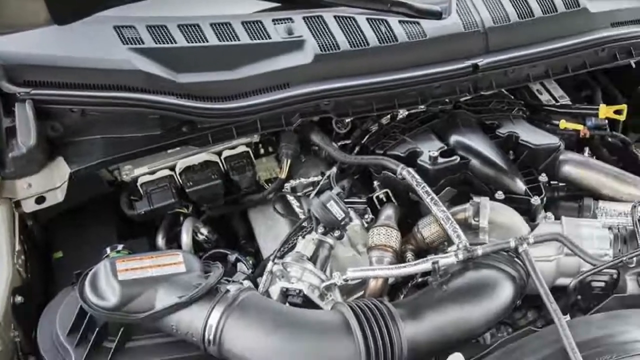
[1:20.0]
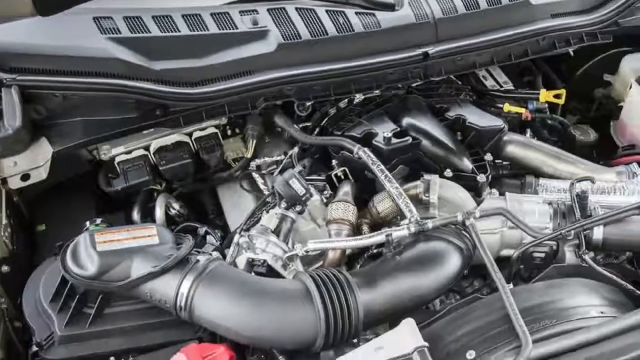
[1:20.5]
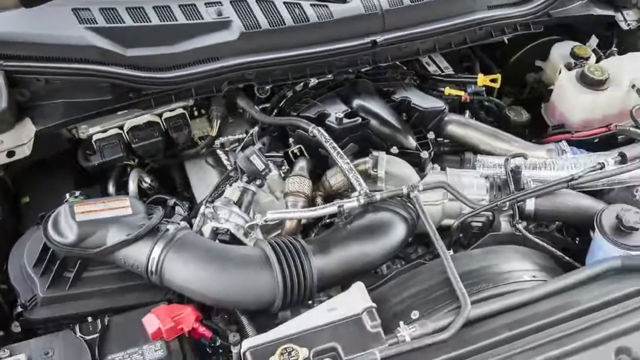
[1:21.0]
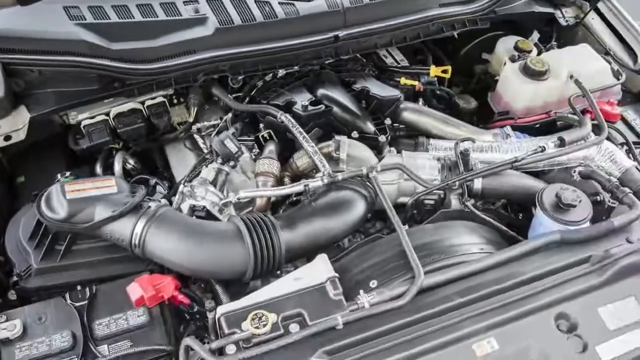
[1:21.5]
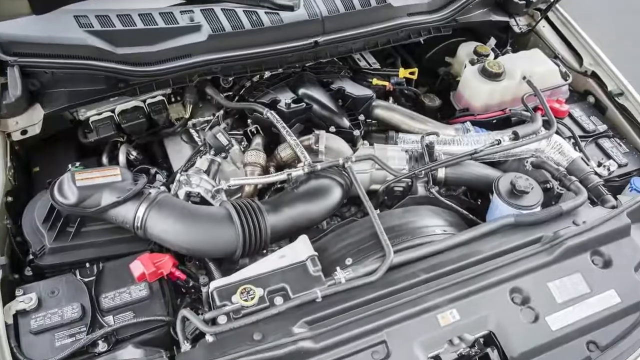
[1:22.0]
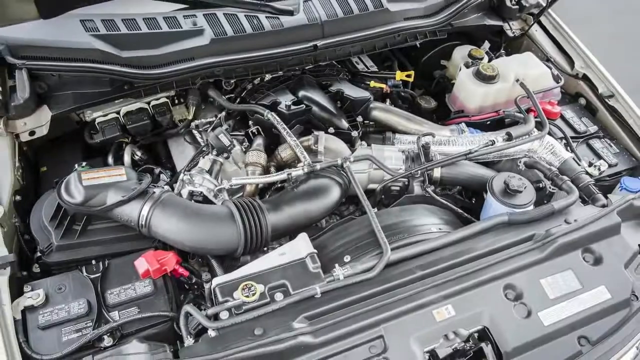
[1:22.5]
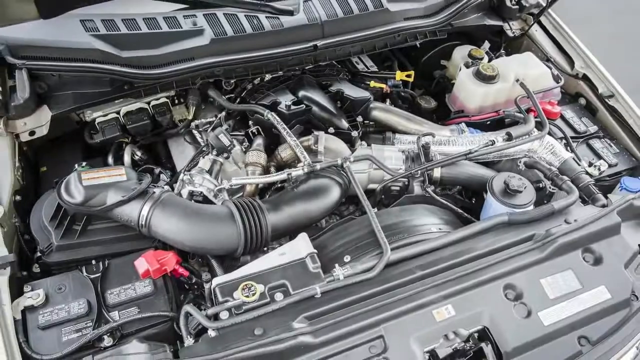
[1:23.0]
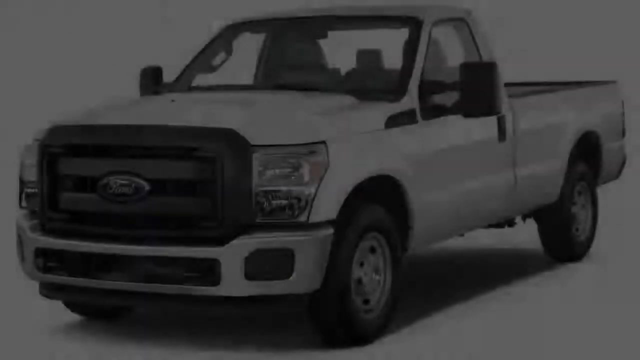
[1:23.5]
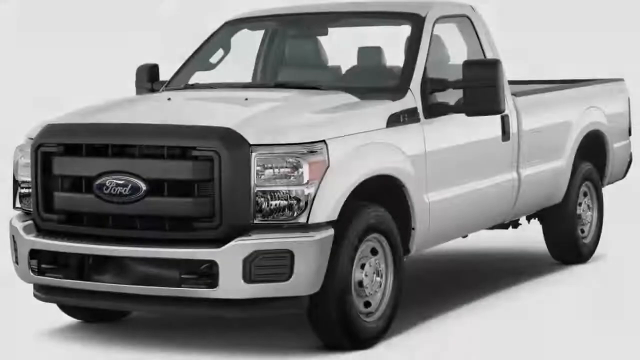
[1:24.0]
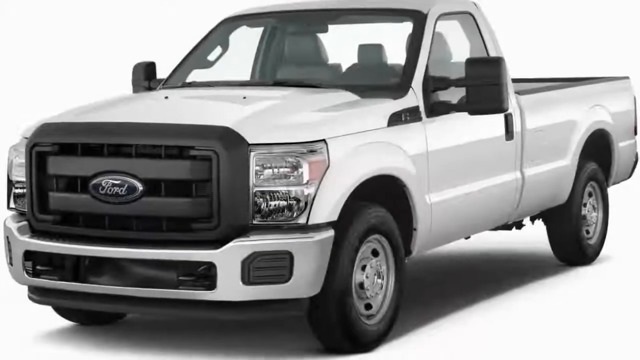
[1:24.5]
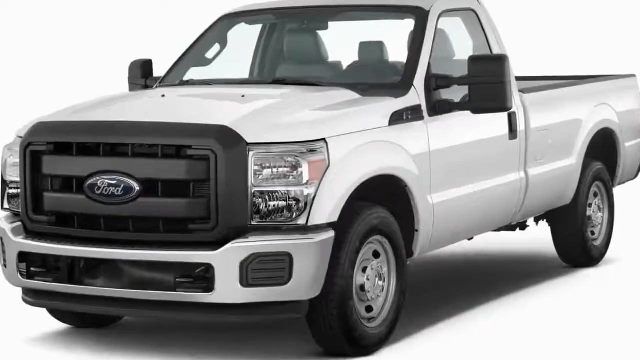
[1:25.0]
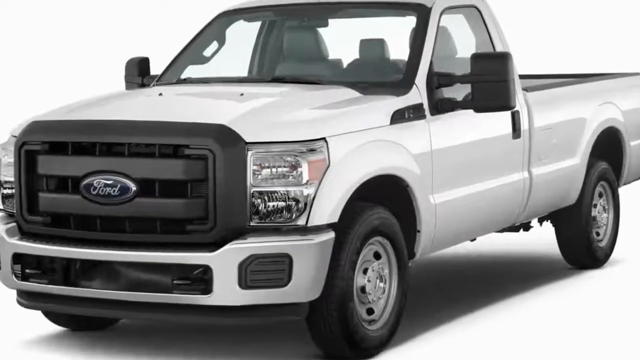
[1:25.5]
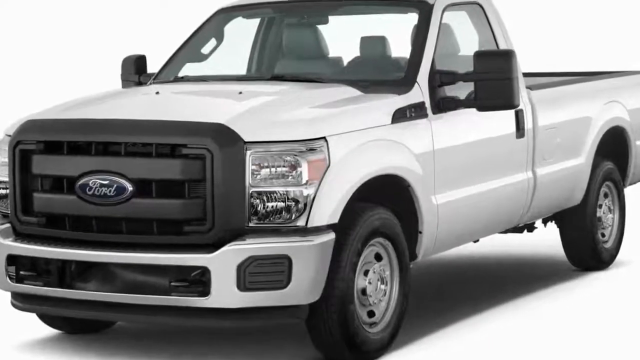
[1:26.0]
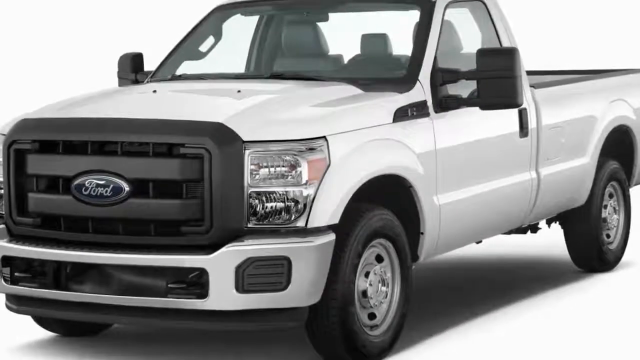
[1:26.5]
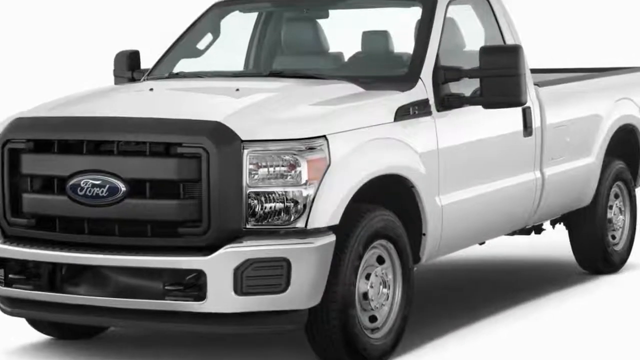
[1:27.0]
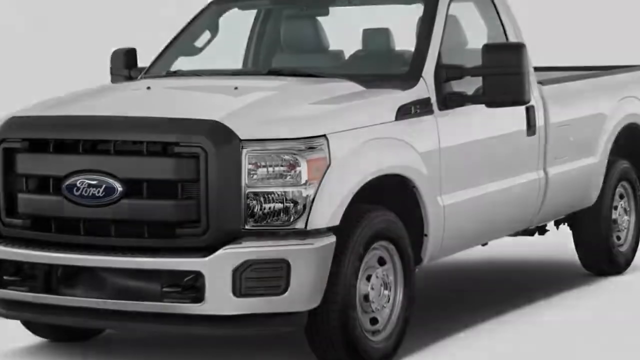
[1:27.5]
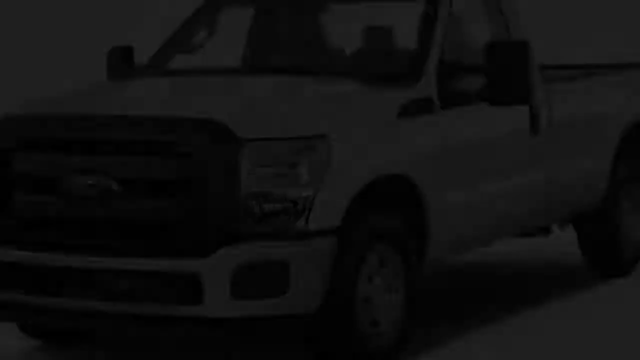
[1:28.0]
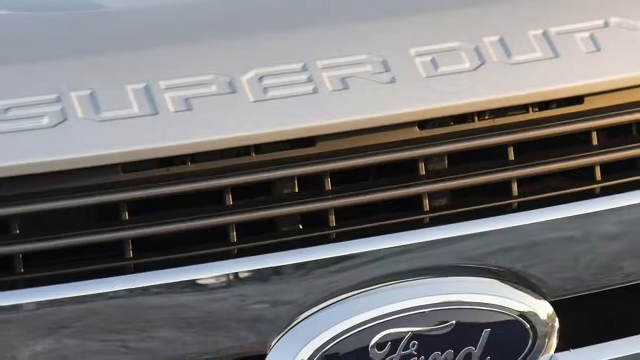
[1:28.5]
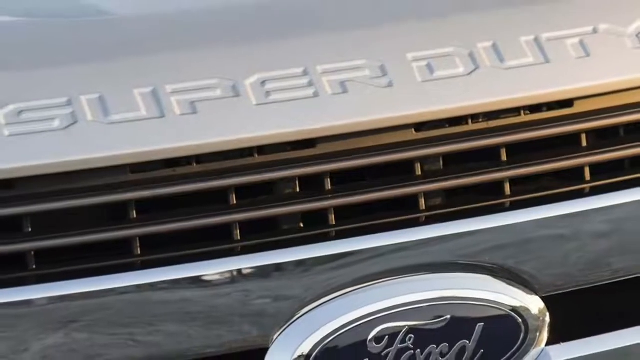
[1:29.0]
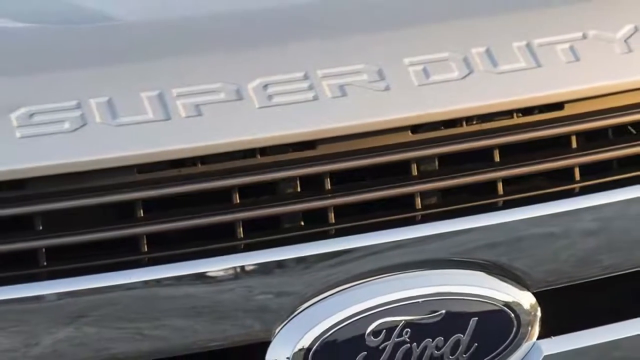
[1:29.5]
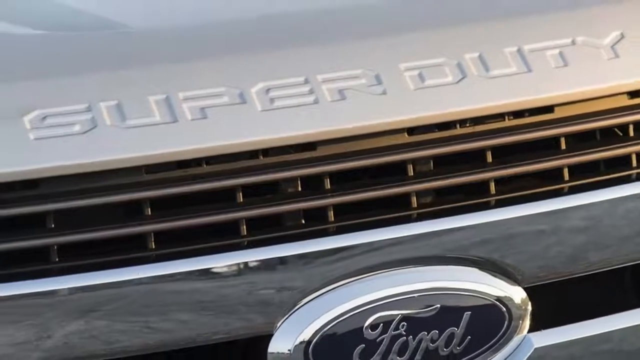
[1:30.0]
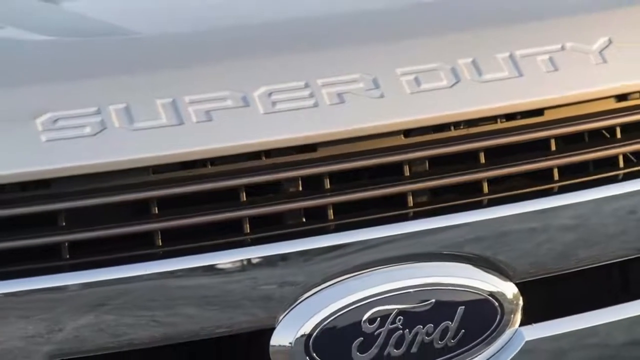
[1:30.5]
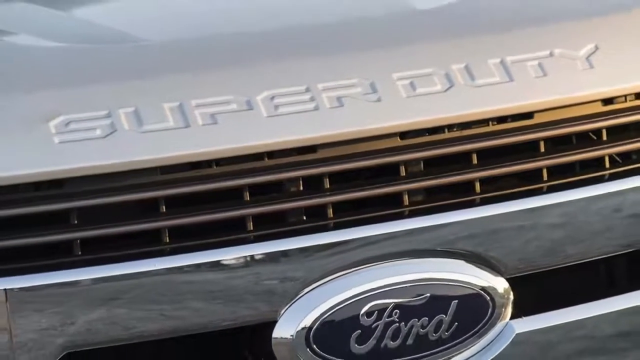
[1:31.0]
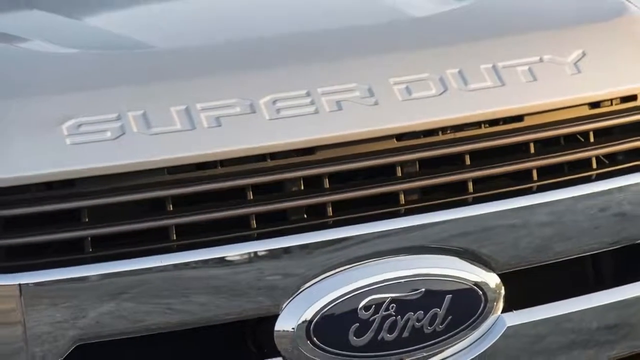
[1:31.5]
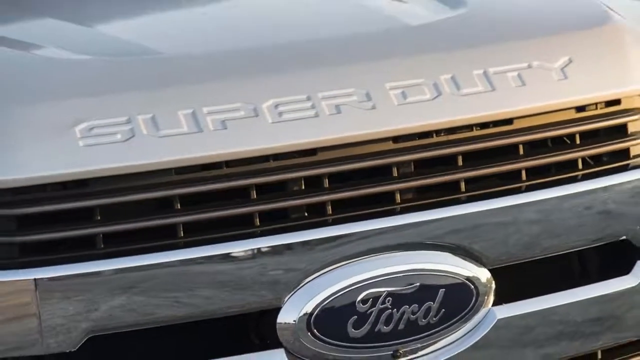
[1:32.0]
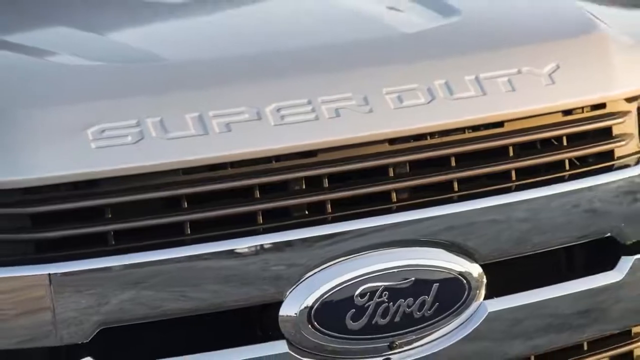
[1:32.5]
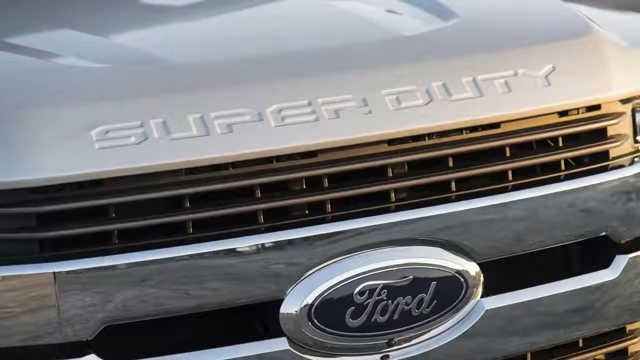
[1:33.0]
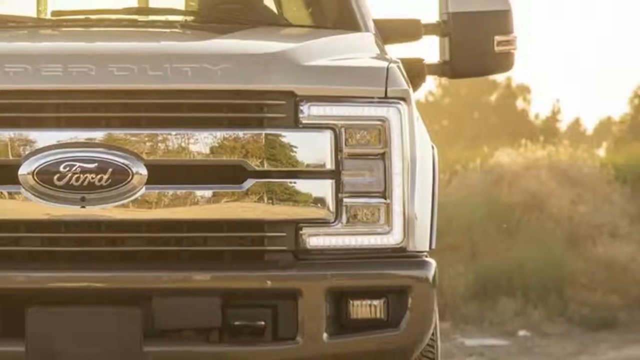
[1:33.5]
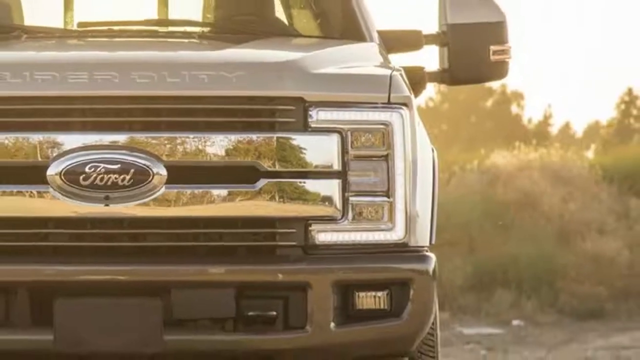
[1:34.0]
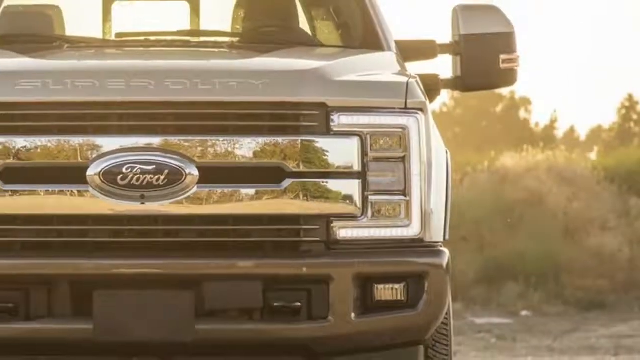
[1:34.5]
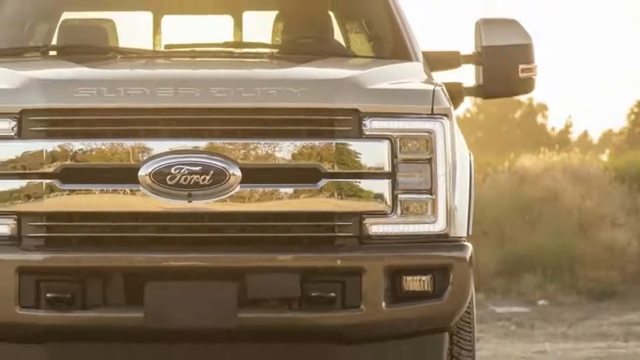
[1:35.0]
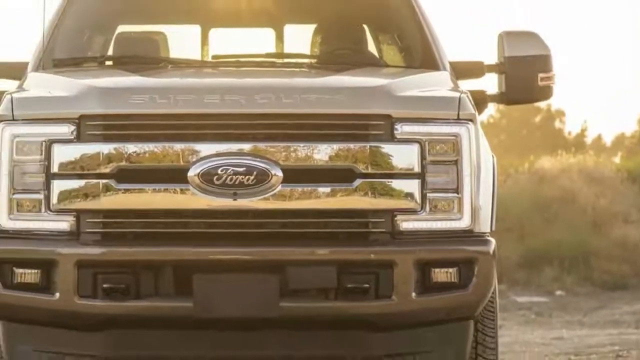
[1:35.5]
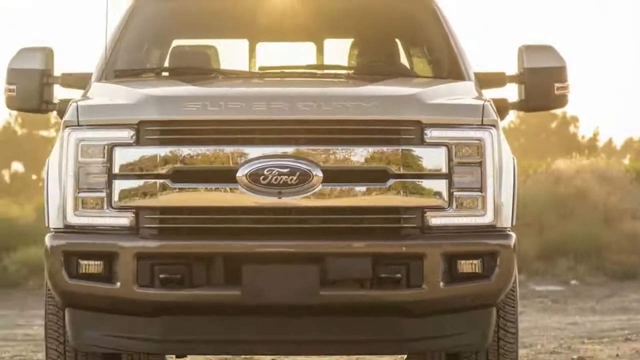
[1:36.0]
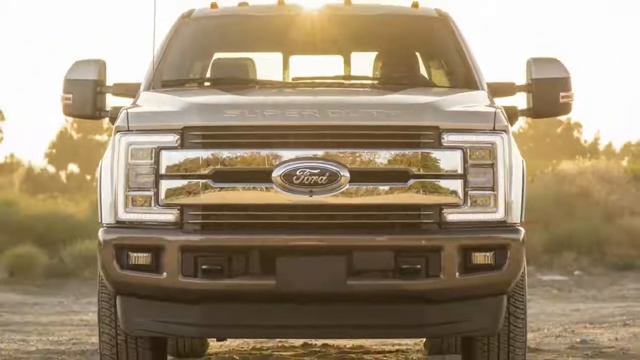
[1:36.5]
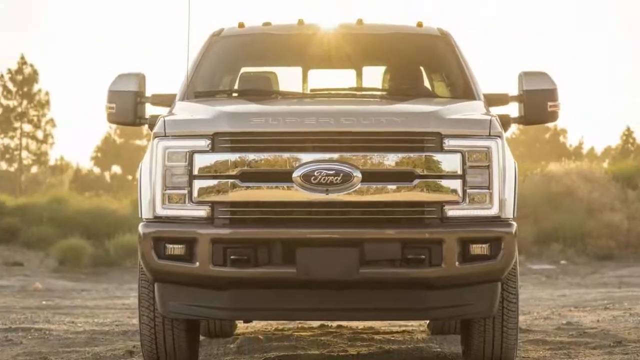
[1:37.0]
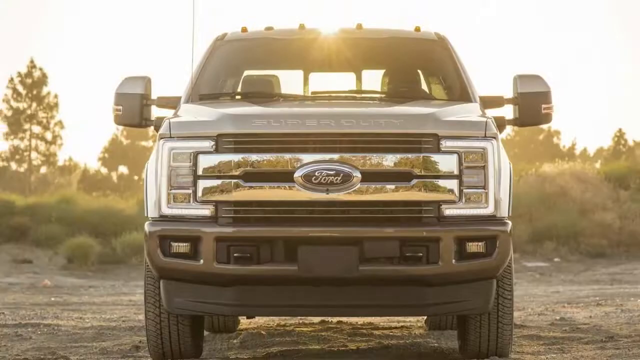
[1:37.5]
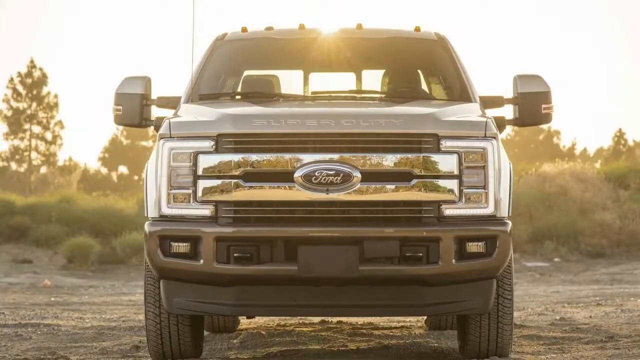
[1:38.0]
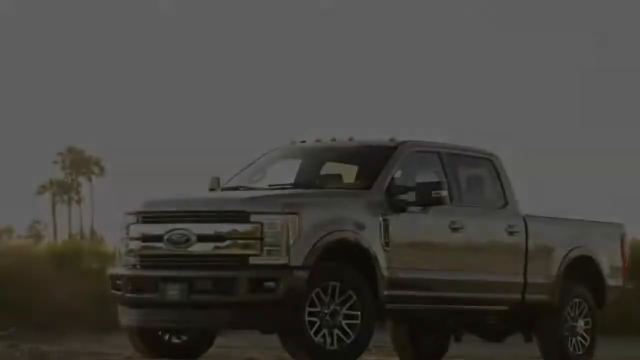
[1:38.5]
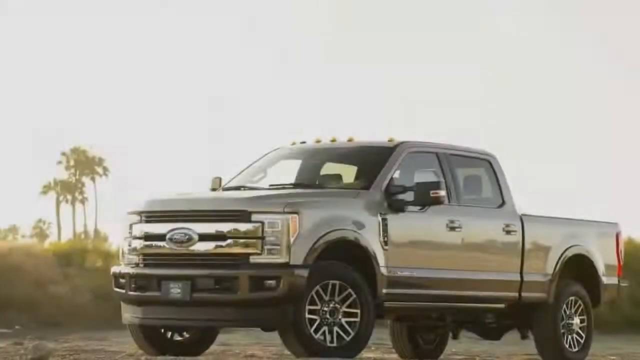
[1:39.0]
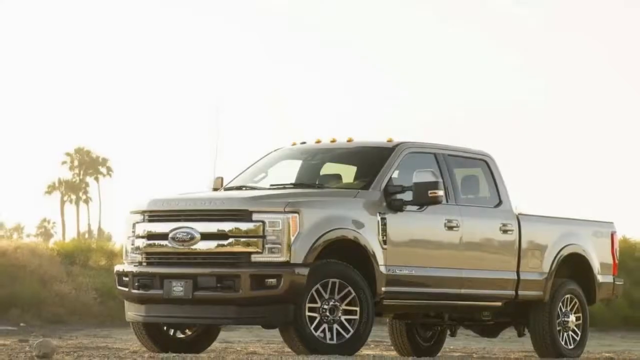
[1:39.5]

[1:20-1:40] With the bonnet lifted, the inside of the engine compartment is visible, with various pipes and bottles containing coolant; it all looks very clean. The view zooms out from the quite tightly packed engine compartment. Next is a picture of a white version of the truck with black features across the middle, entirely black wing mirrors and a single set of doors, so it has no rear passenger compartment. It is on a white background, and its wheels are steel rather than alloy, making it a more basic model of the truck. The view then returns to the embossed text Super Duty on the front bonnet, with the radiator grille and the Ford logo. Then the front of the vehicle is shown in front of the trees, and the image scrolls outwards and to the left until the full vehicle is visible, then scrolls to the earlier picture of the vehicle side-on in front of the trees.